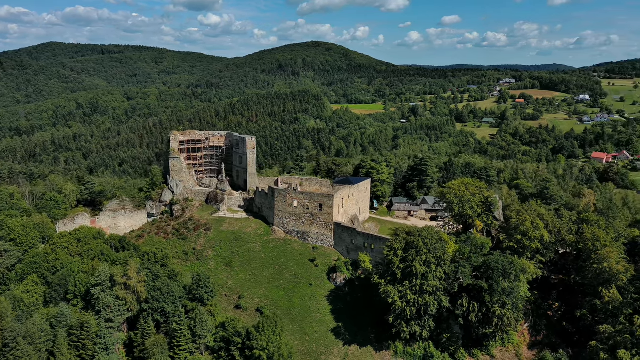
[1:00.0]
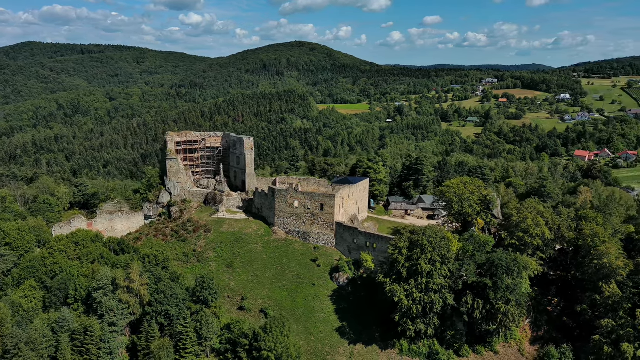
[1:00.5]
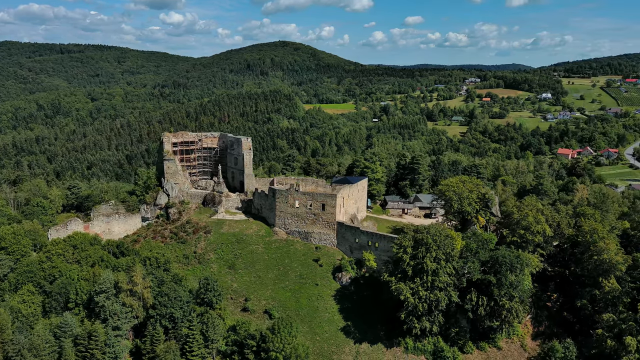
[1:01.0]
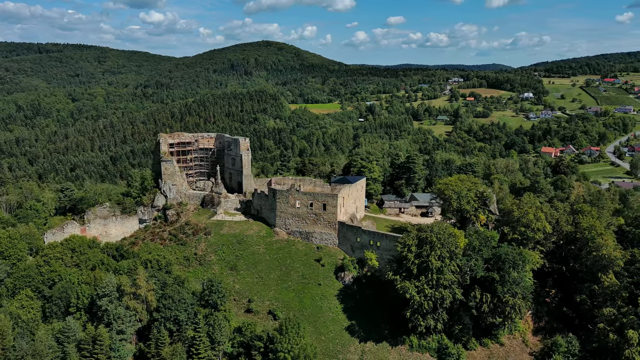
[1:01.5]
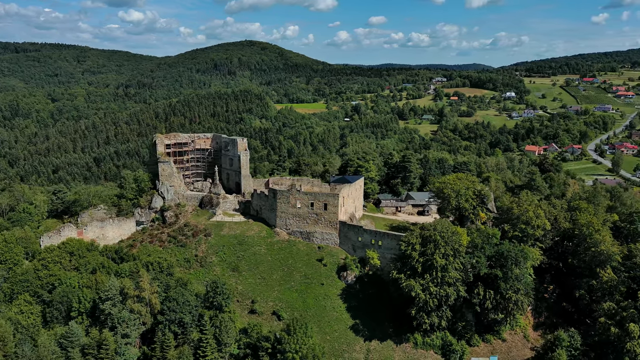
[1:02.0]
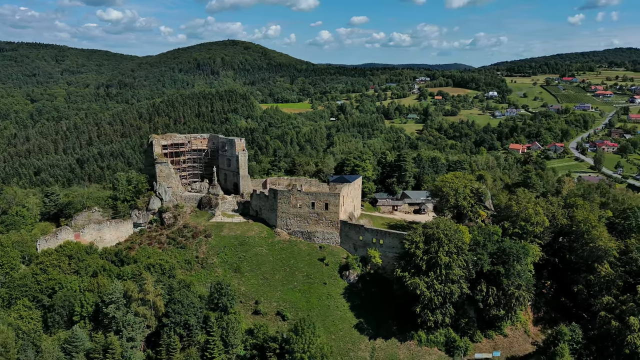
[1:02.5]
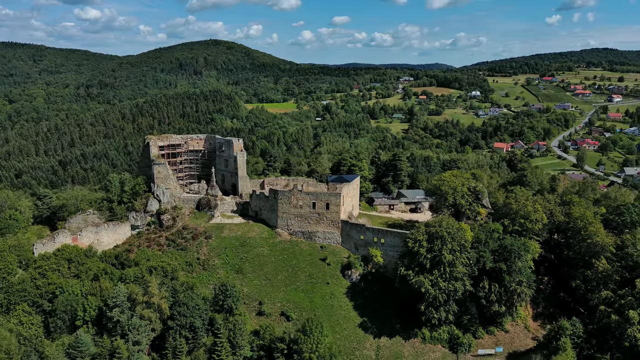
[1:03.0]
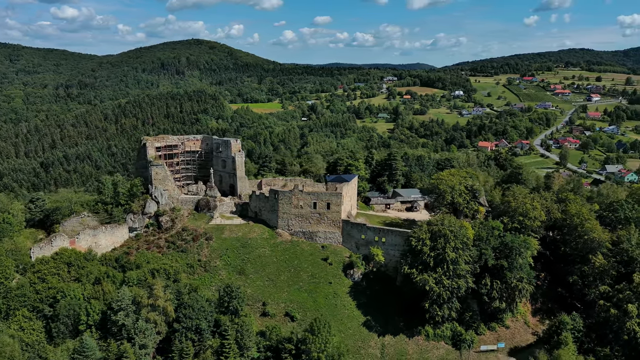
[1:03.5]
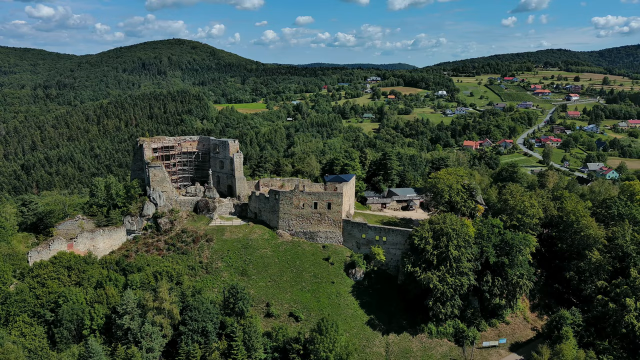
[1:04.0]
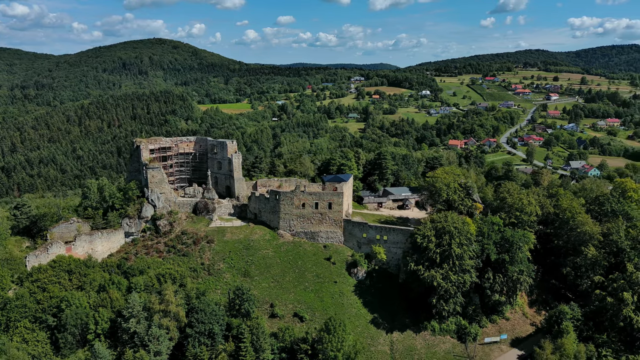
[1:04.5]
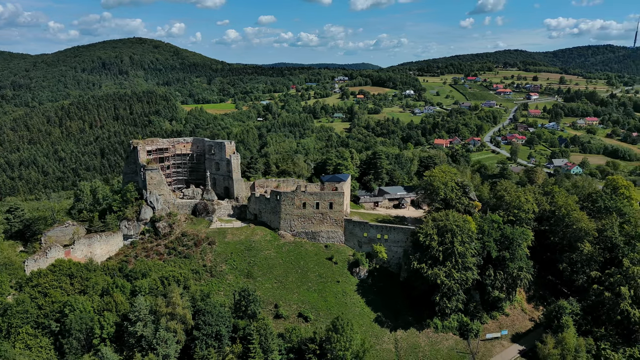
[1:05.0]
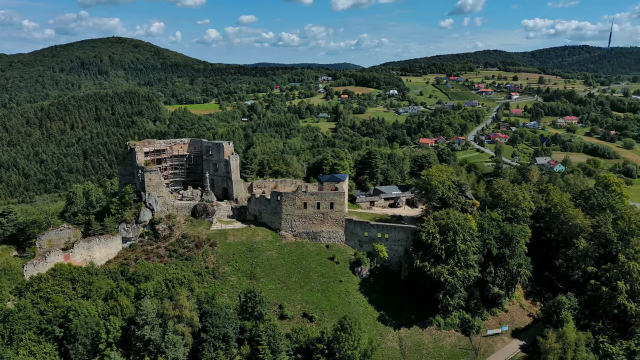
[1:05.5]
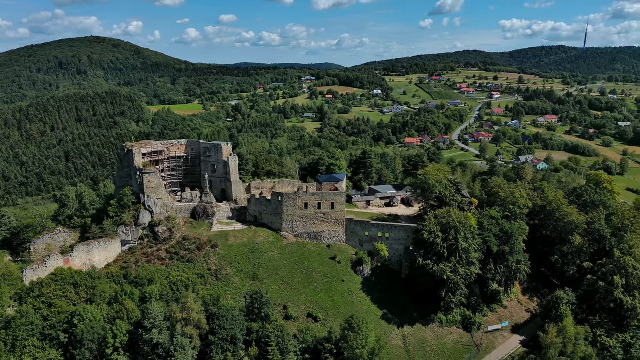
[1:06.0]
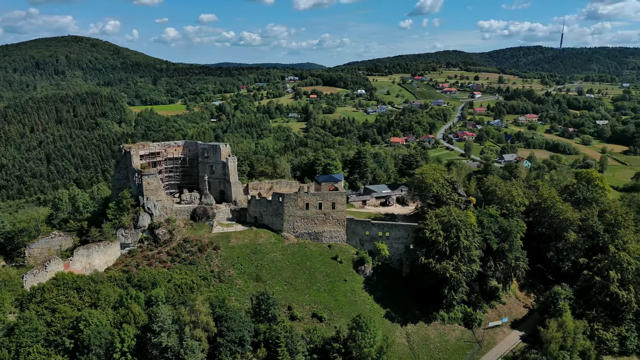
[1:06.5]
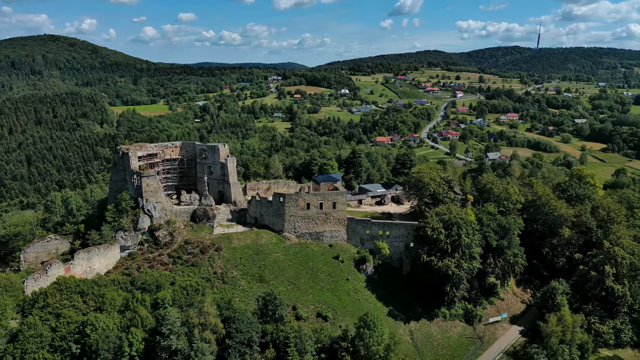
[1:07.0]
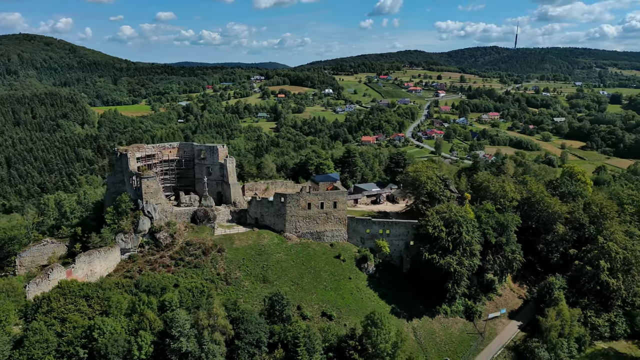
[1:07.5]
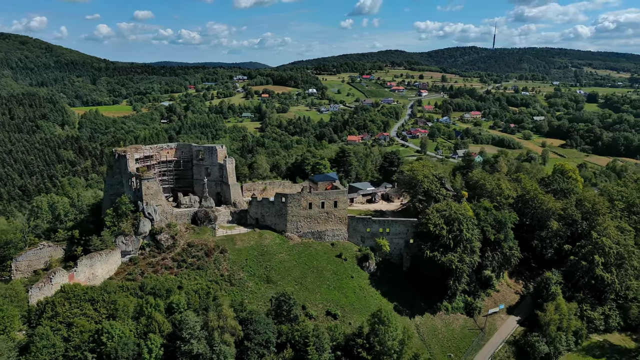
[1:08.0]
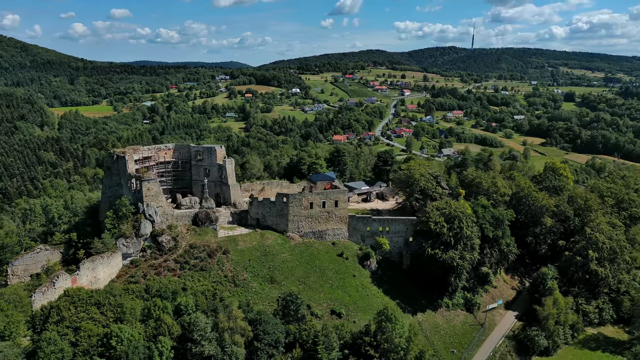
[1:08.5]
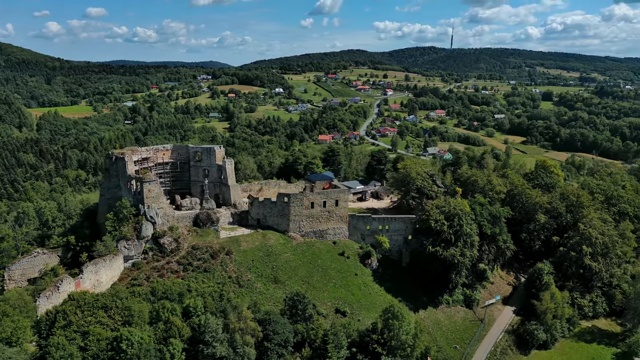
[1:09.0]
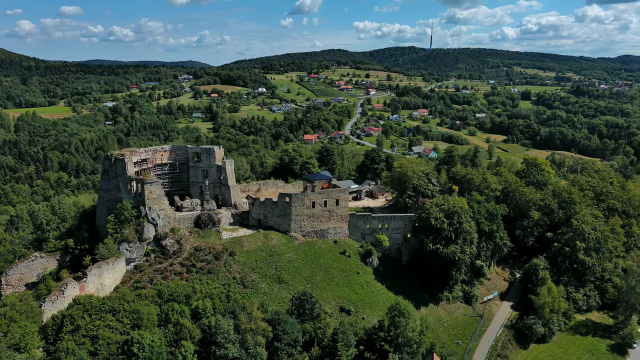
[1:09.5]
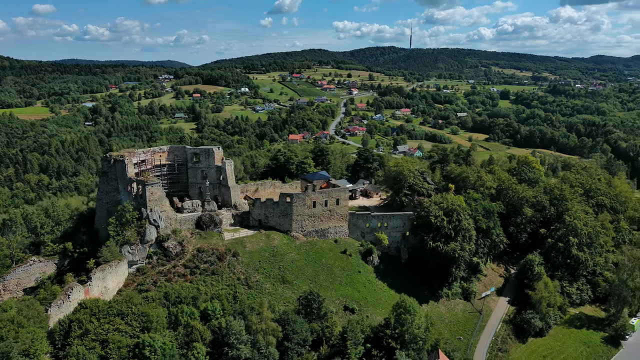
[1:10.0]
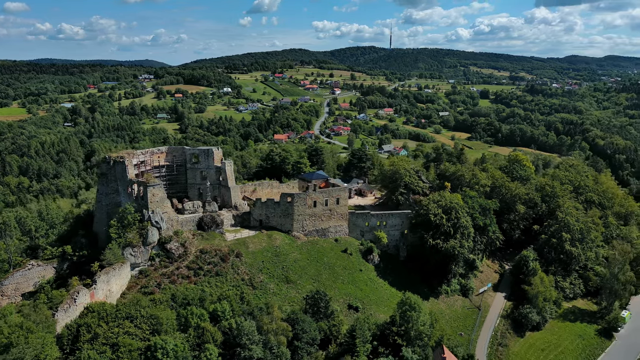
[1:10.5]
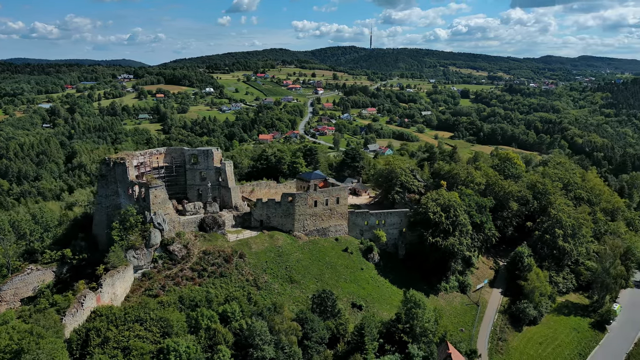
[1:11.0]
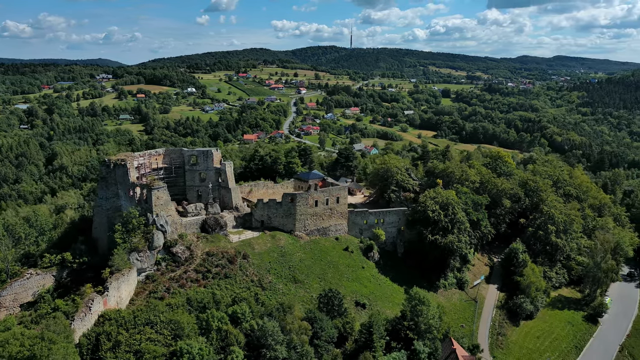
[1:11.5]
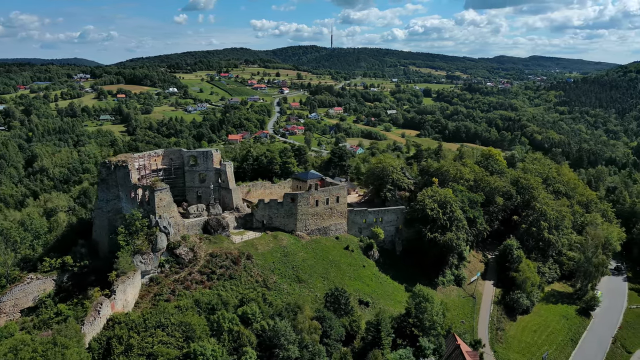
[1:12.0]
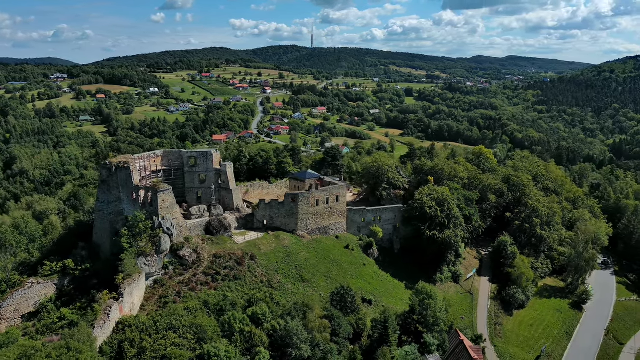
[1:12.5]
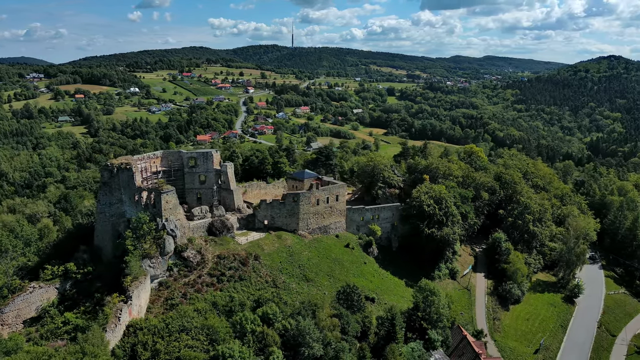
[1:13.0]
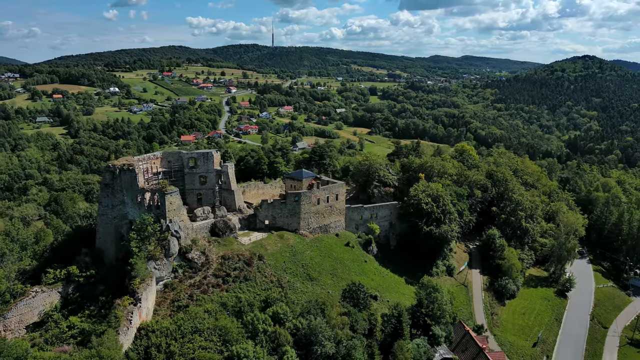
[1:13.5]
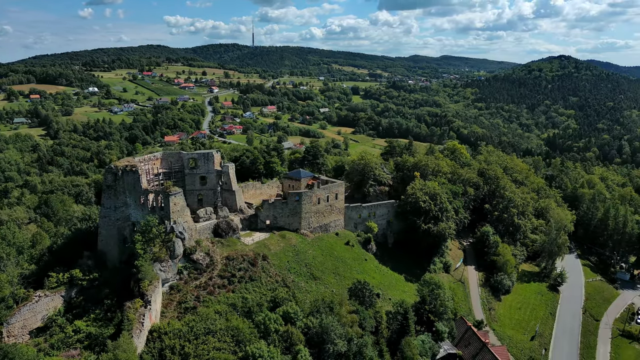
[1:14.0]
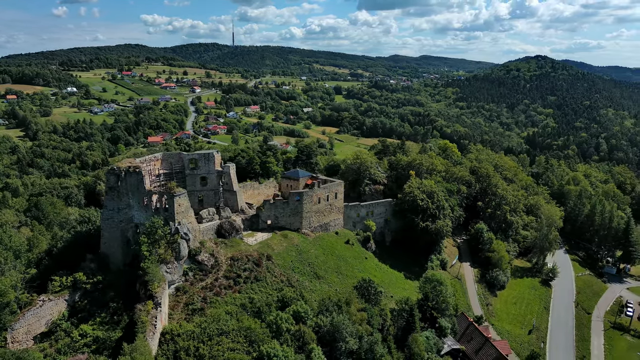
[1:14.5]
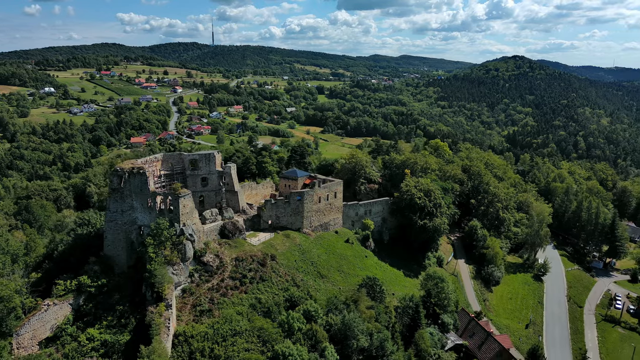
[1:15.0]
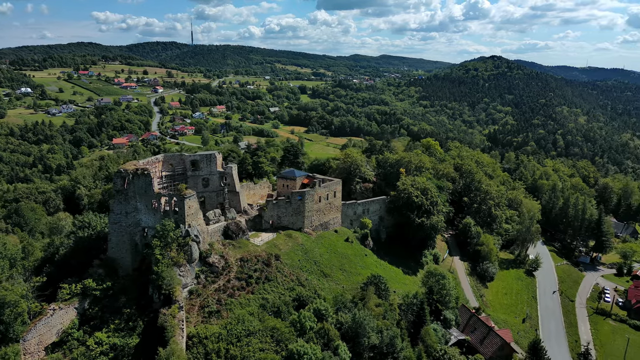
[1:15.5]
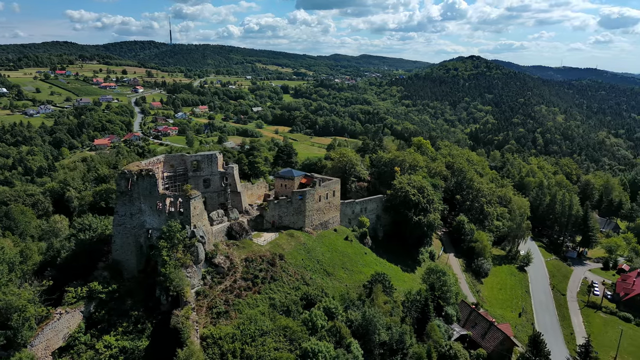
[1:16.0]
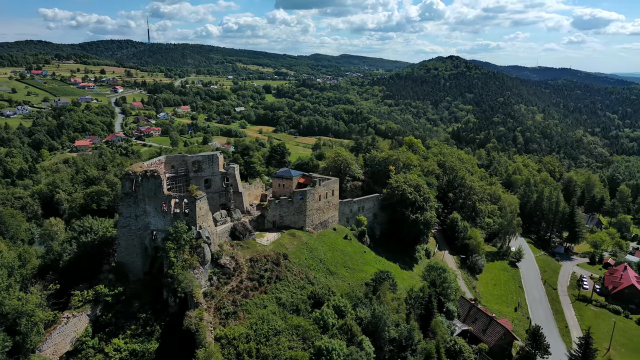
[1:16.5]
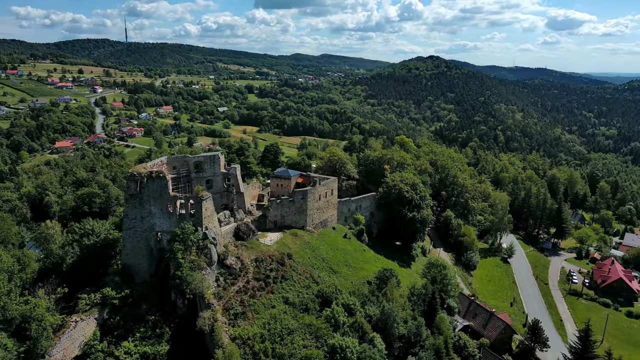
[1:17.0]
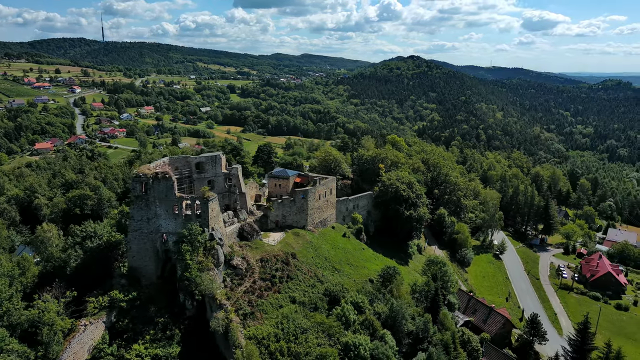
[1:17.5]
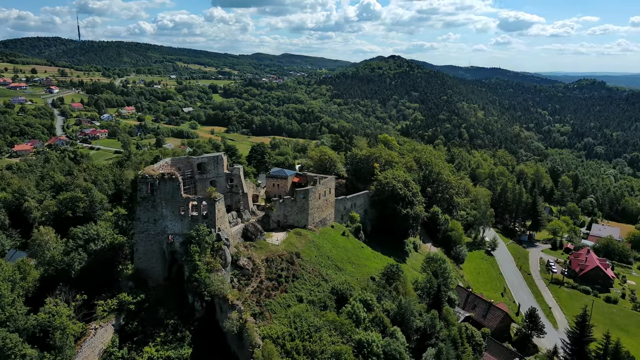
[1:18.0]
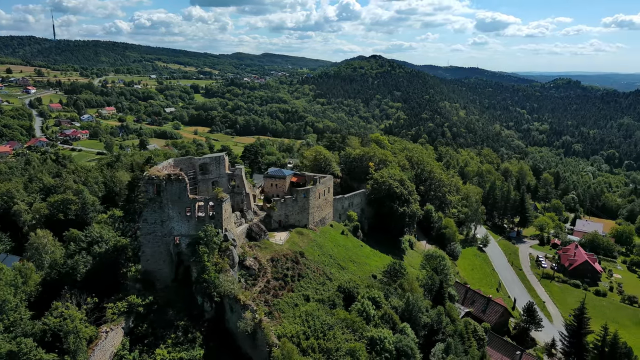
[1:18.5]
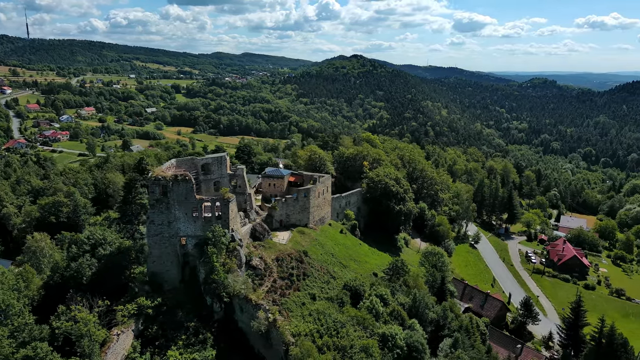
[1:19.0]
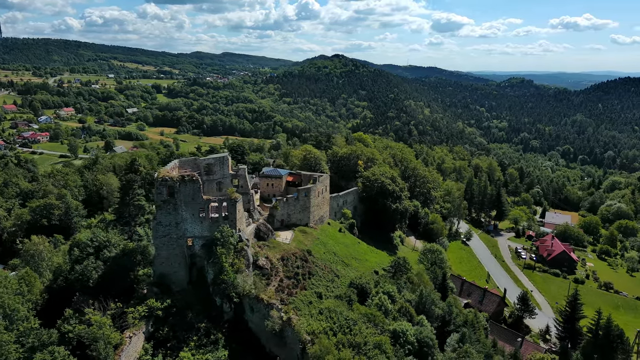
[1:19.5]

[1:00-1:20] In daylight, the aerial view shows the very old structure, which is incomplete, with some of it missing. It looks to be some type of fort set on a hill, with walls that are still standing, and it looks fortified. The surrounding countryside is open, with trees and grass.